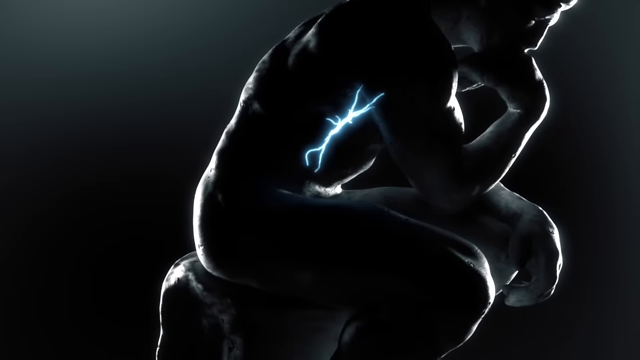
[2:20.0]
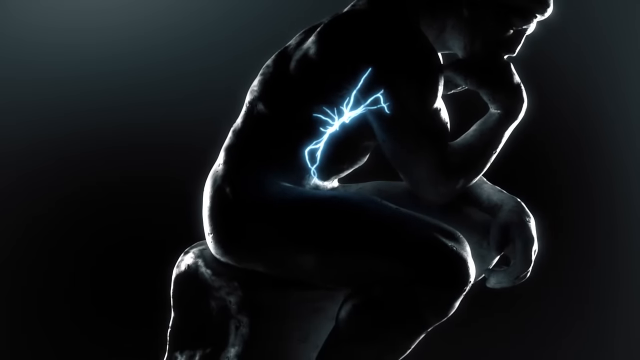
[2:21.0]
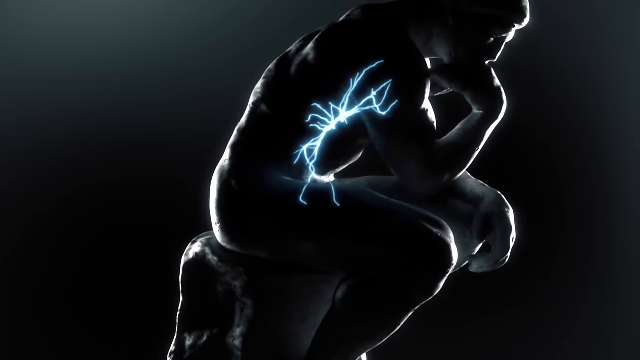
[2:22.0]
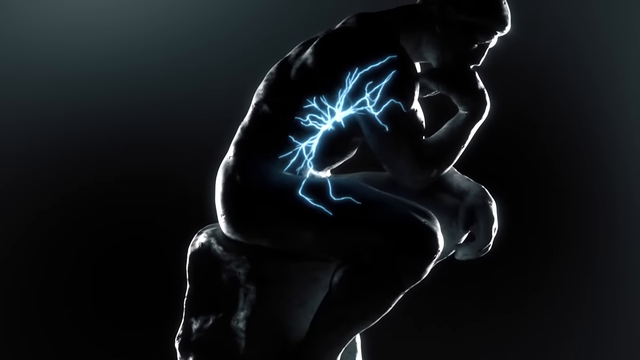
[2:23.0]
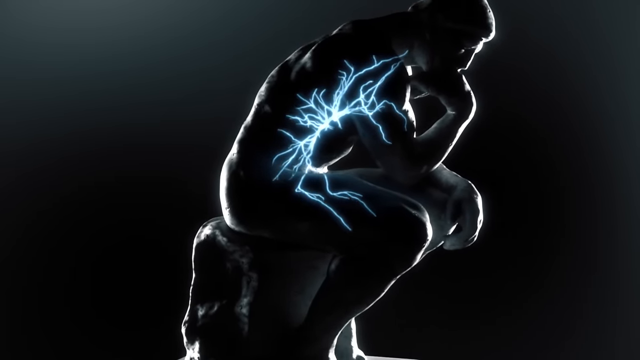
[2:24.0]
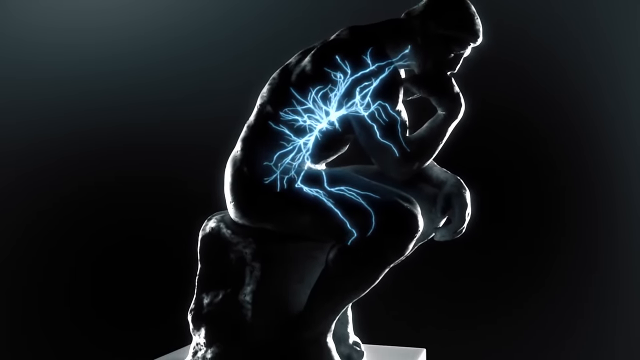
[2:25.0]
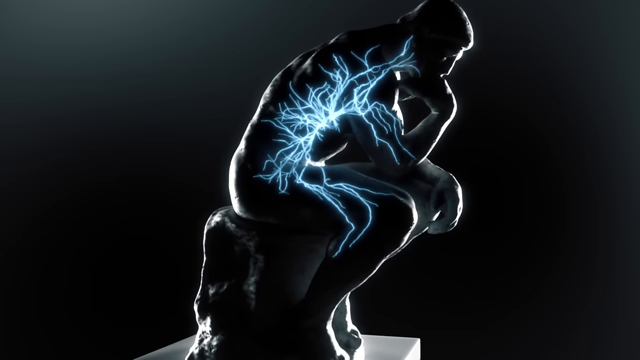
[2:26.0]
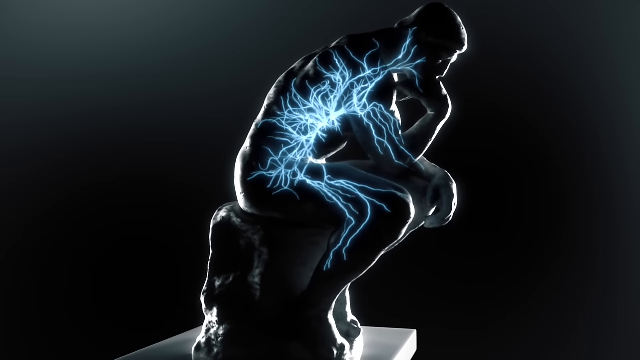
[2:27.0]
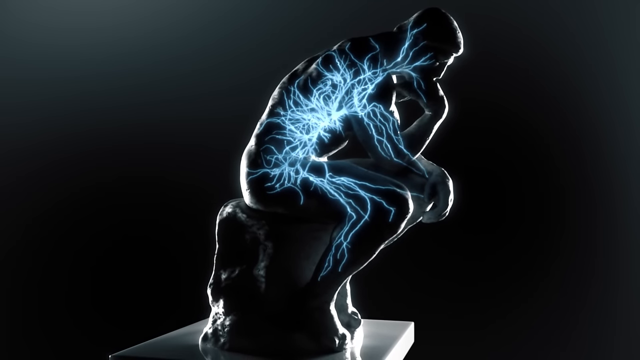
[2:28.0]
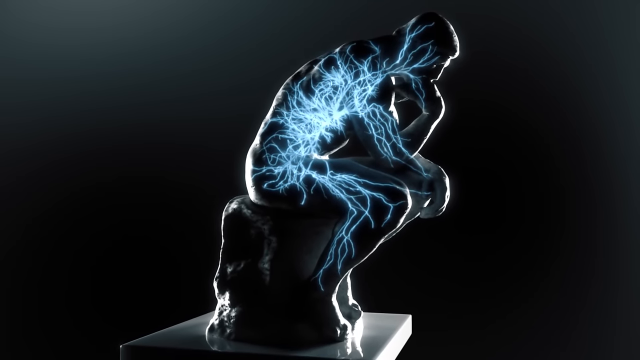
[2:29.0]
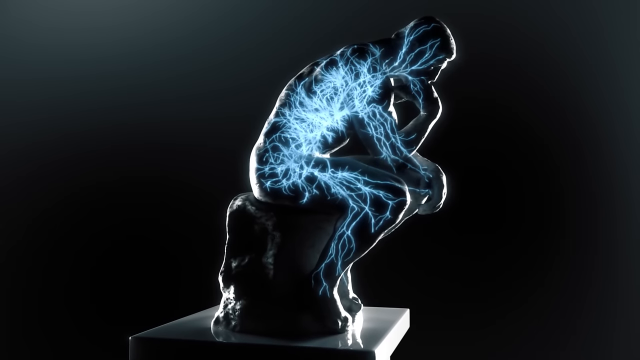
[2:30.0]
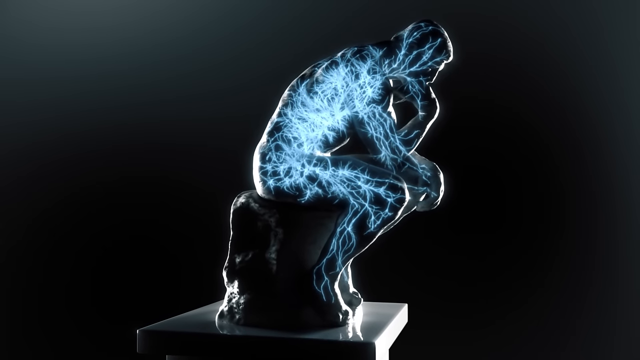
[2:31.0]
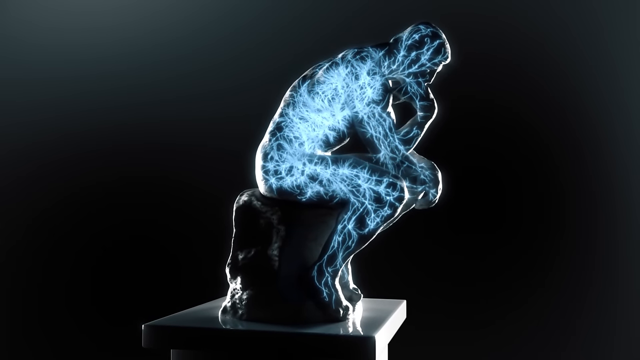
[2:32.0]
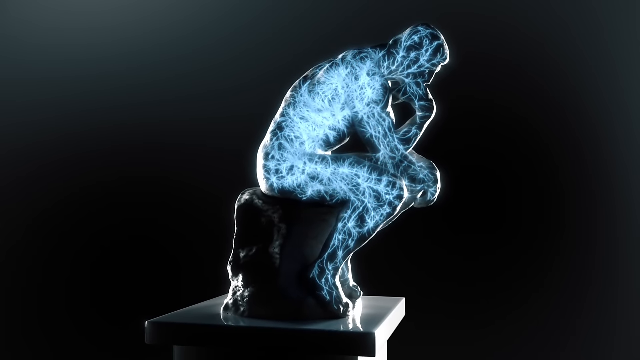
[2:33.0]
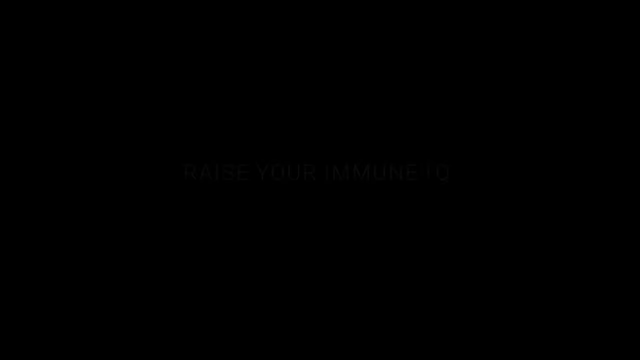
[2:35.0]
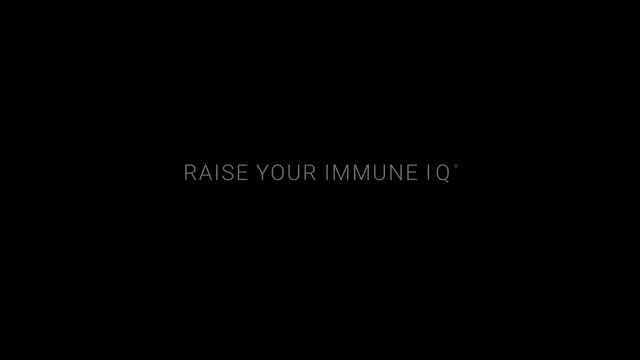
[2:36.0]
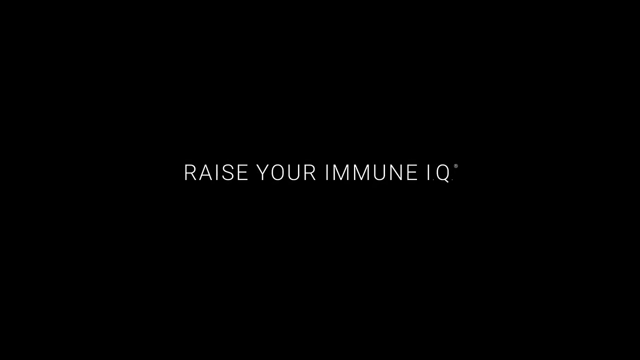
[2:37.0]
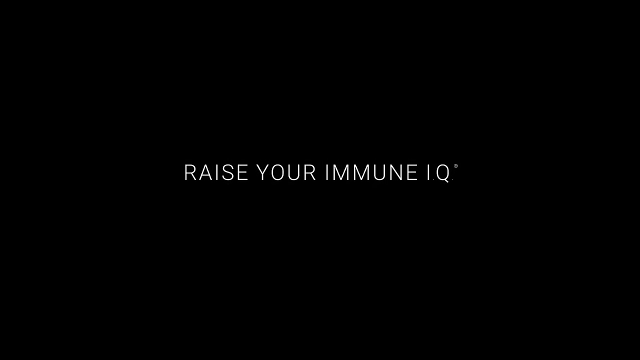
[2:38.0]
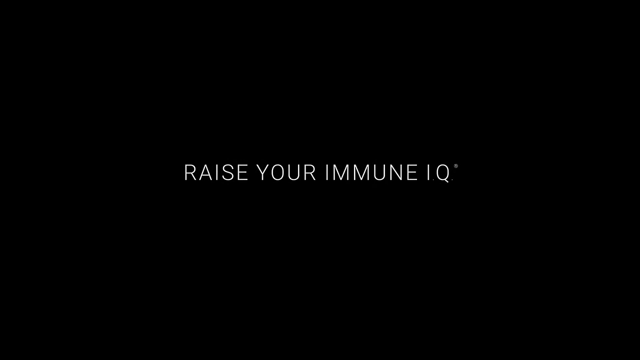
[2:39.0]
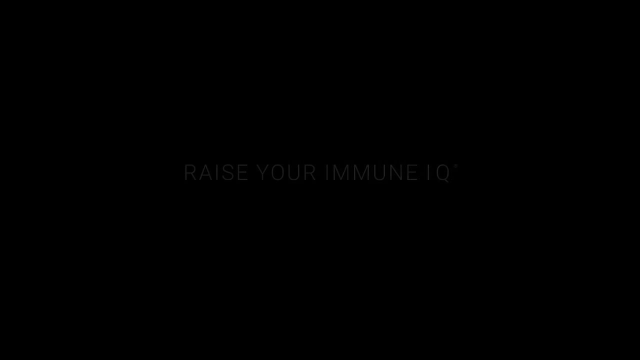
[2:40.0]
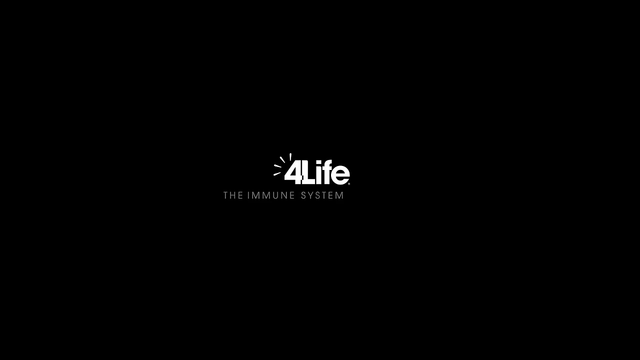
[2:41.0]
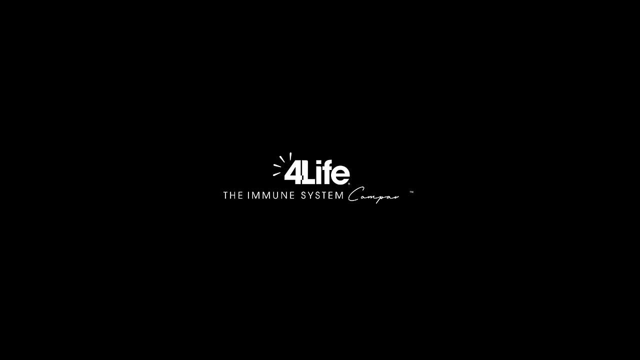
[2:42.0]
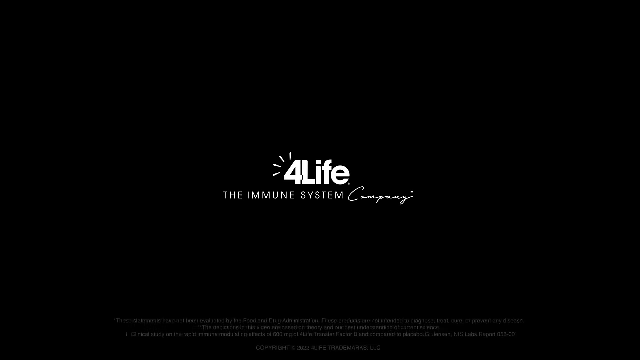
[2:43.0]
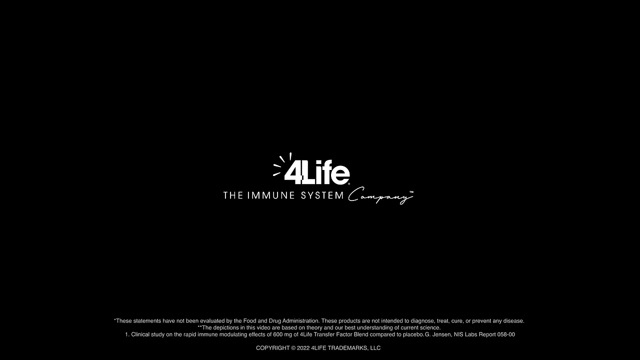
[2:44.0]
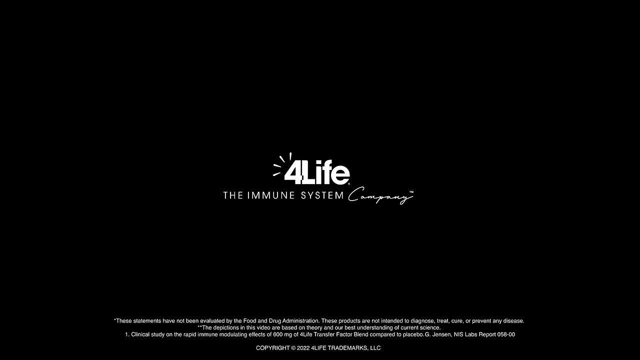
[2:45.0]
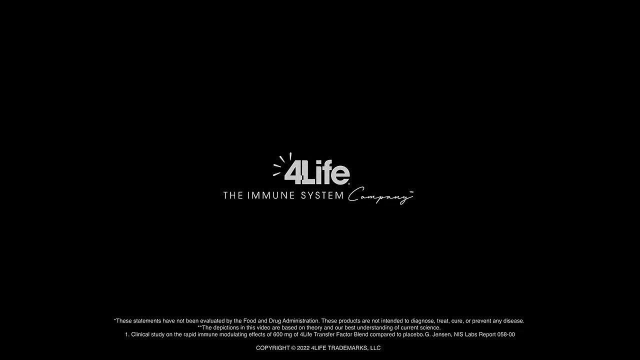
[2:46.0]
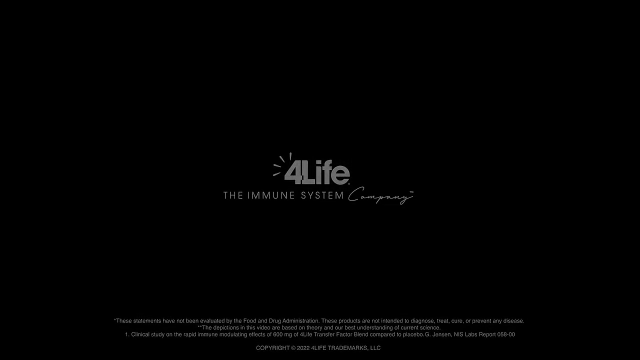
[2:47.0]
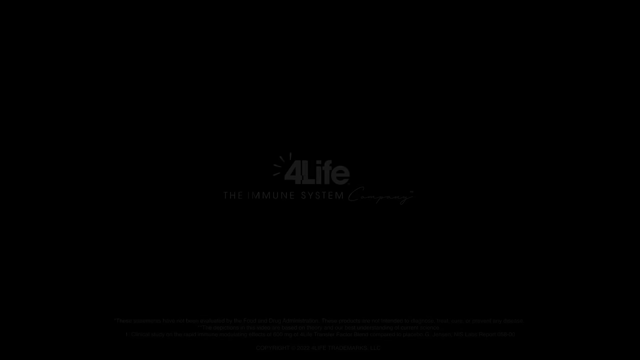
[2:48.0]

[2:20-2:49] Against a gray background, a statue of the Thinker is hunched over. The statue is also in grayscale, darker in some spots and lighter in others, with reflections of light defining its form. In the inner abdomen area, a blue streak of light expands in different directions, splintering off into different areas as it spreads through the body. As the light continues to spread across the statue, it looks almost like it is forming the network of veins, arteries and nerves of the body, moving all the way through and creating a blue and white glowing light inside the statue and a woven network of lights. The image of the statue then fades away, text reading "Raise your immune IQ" pops up on the screen, and finally a logo reading "4Life, the immune system company" appears as the last thing in the video.